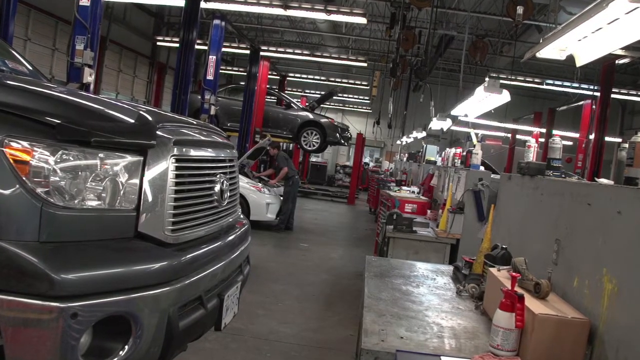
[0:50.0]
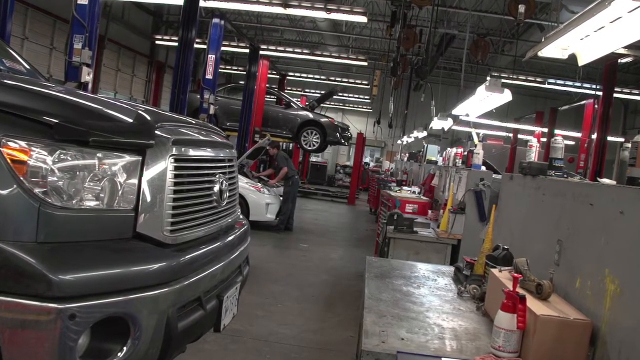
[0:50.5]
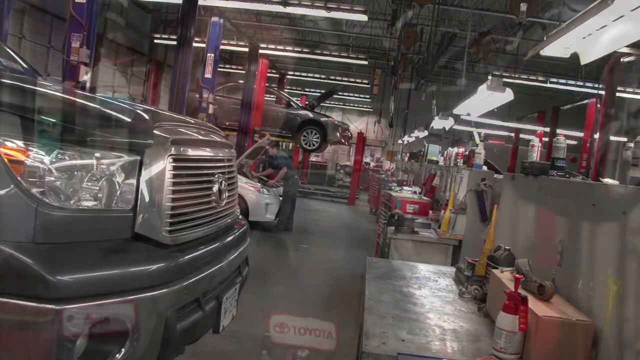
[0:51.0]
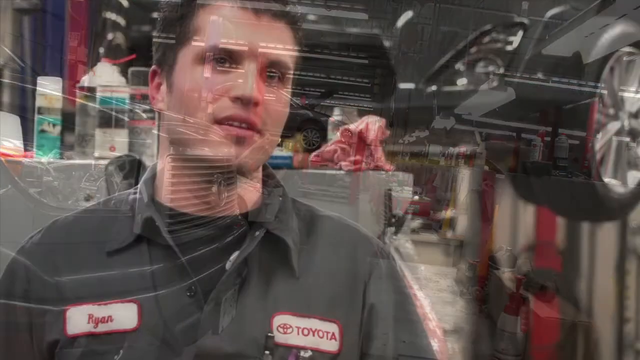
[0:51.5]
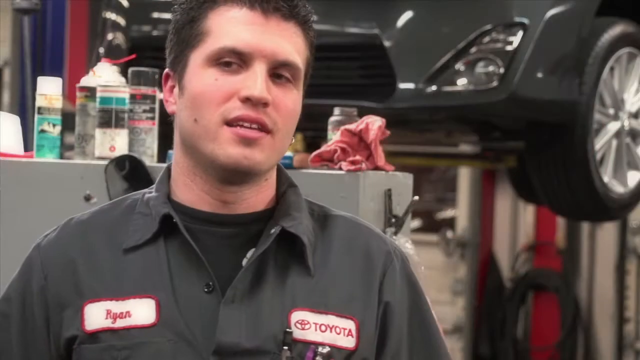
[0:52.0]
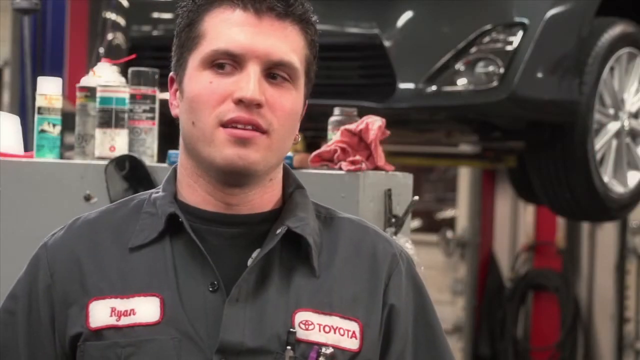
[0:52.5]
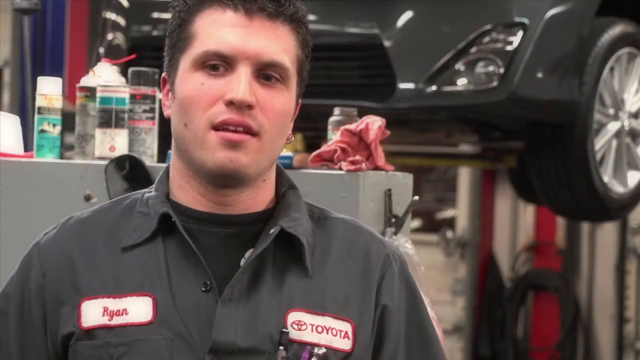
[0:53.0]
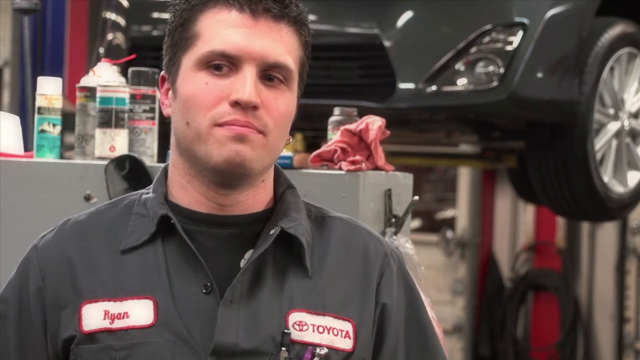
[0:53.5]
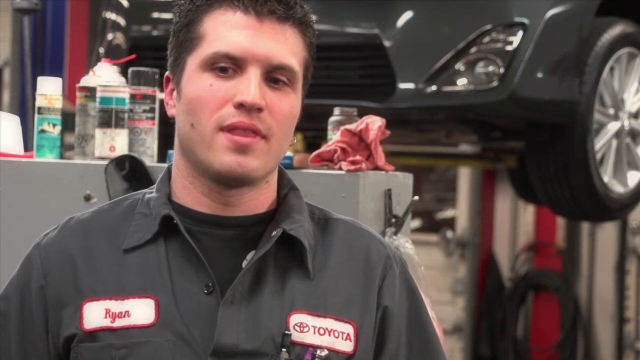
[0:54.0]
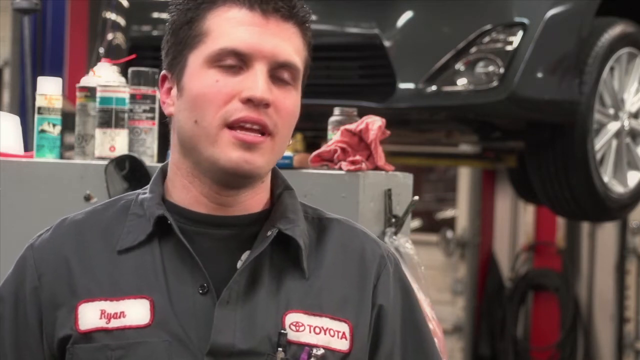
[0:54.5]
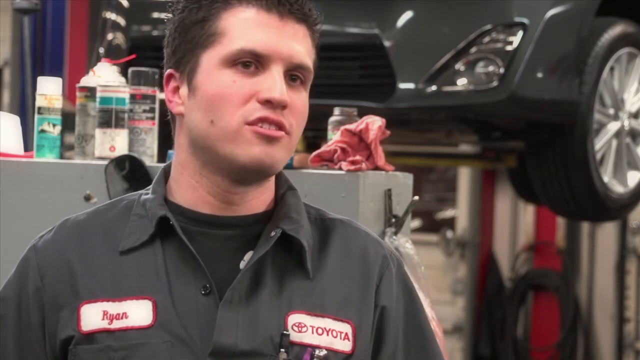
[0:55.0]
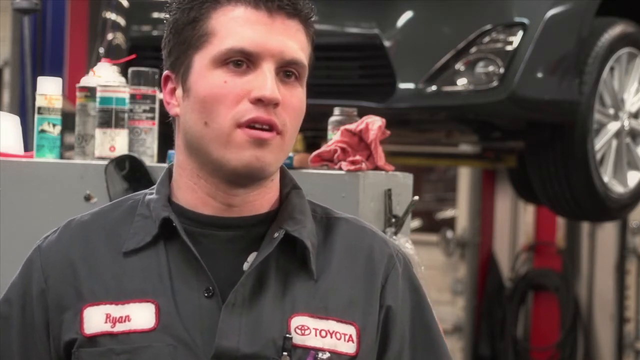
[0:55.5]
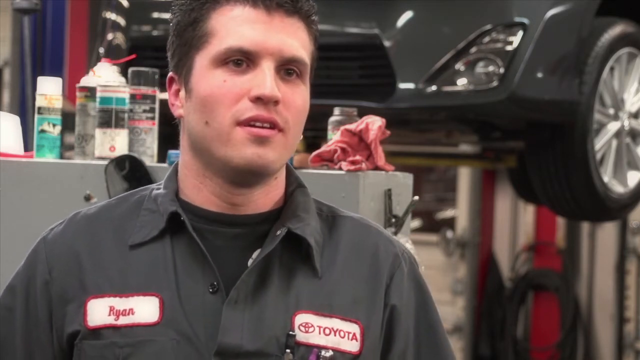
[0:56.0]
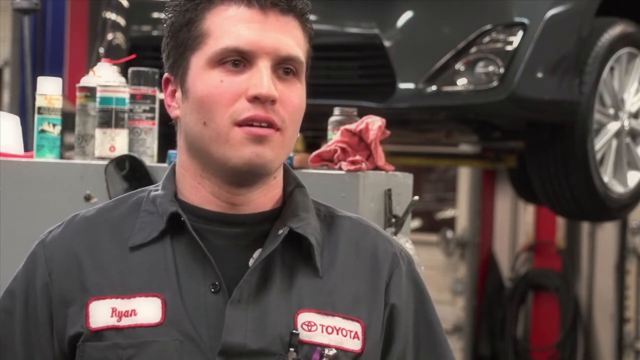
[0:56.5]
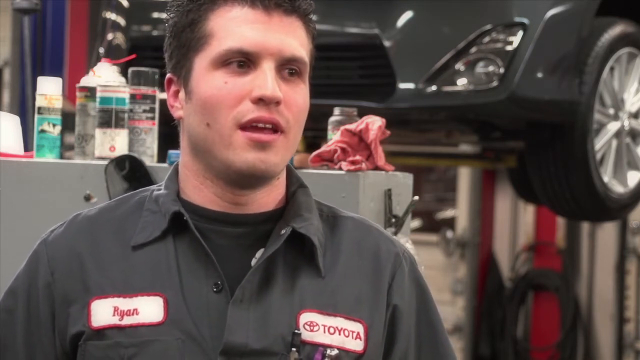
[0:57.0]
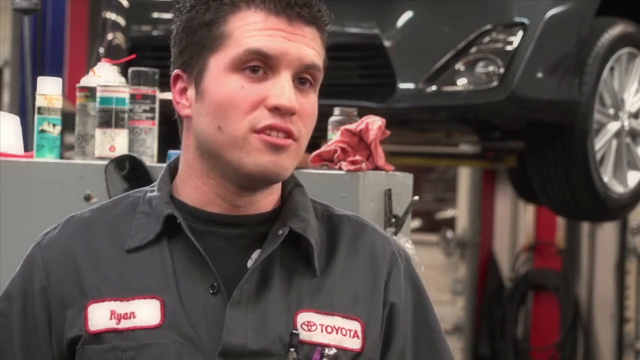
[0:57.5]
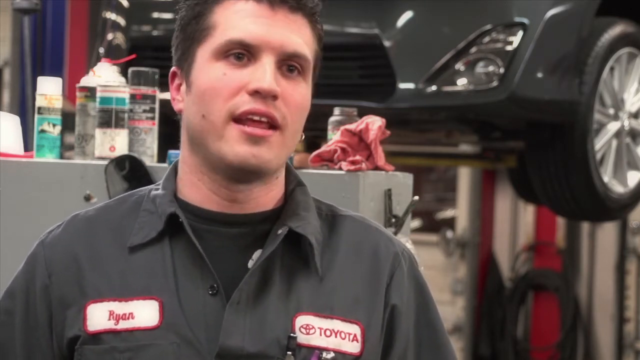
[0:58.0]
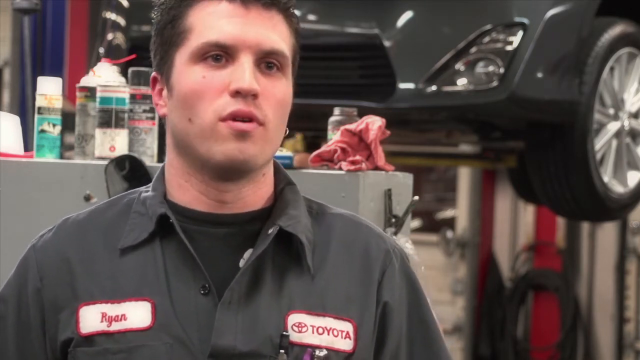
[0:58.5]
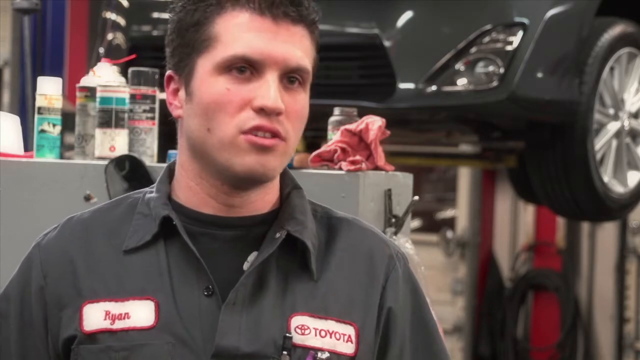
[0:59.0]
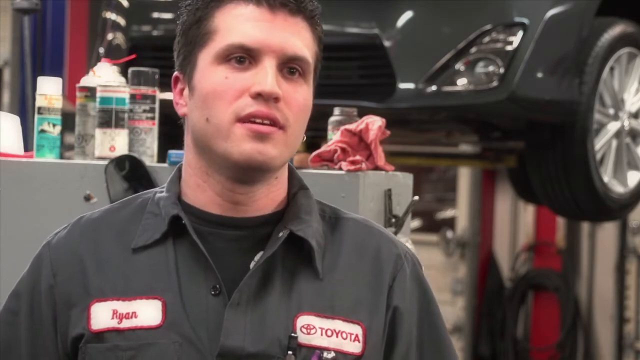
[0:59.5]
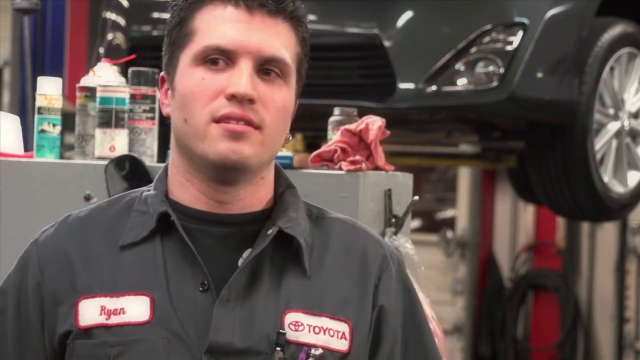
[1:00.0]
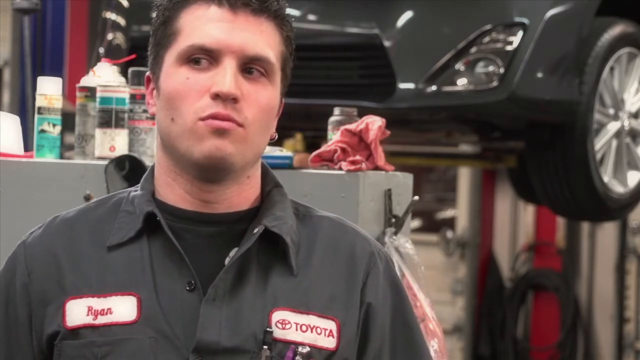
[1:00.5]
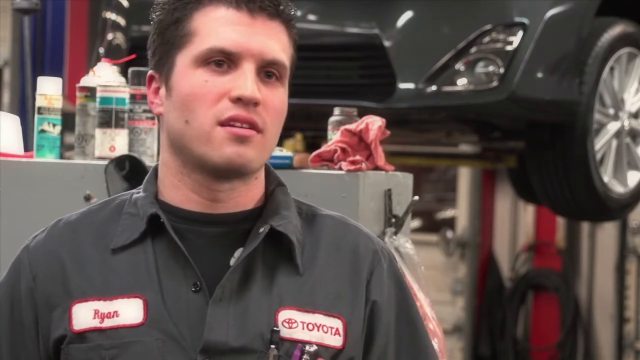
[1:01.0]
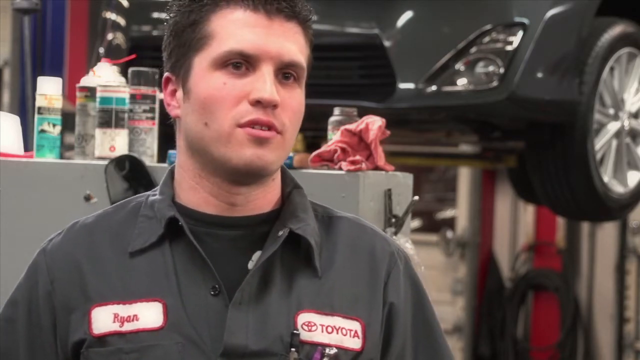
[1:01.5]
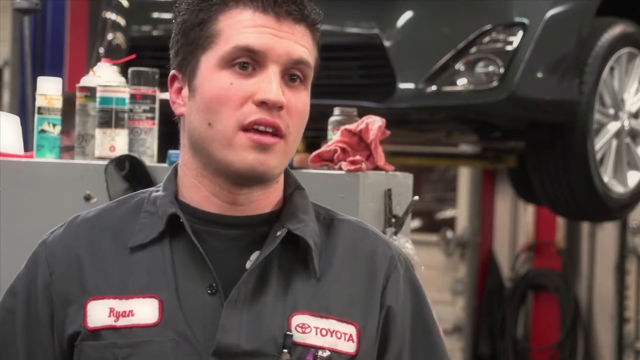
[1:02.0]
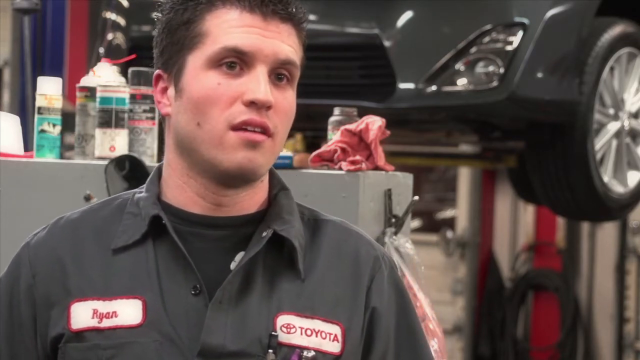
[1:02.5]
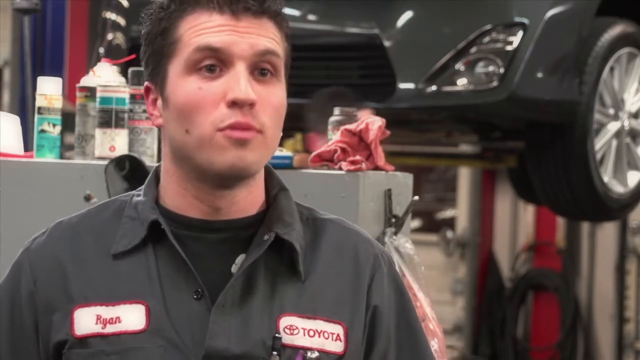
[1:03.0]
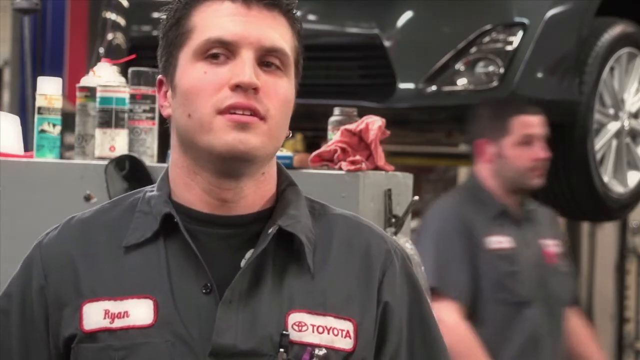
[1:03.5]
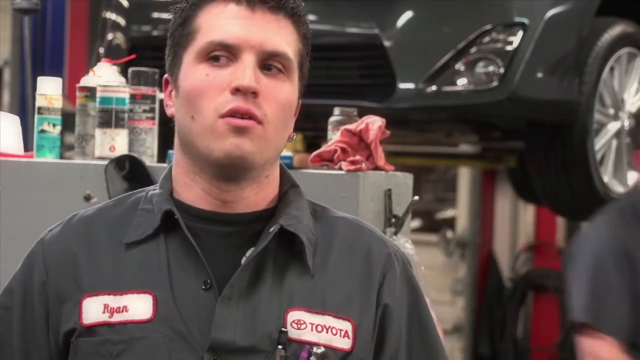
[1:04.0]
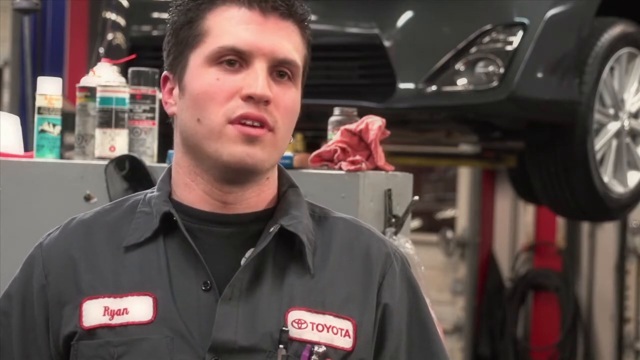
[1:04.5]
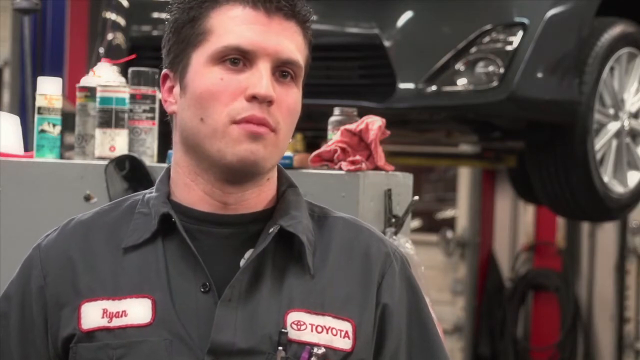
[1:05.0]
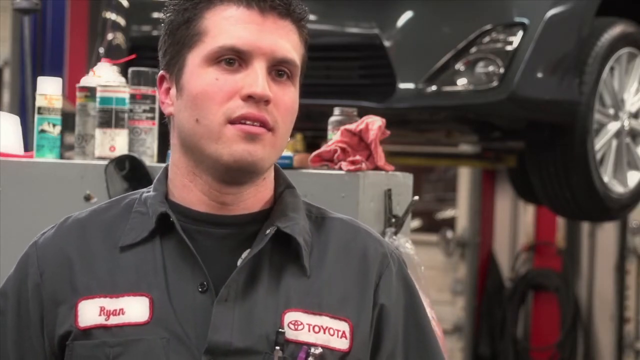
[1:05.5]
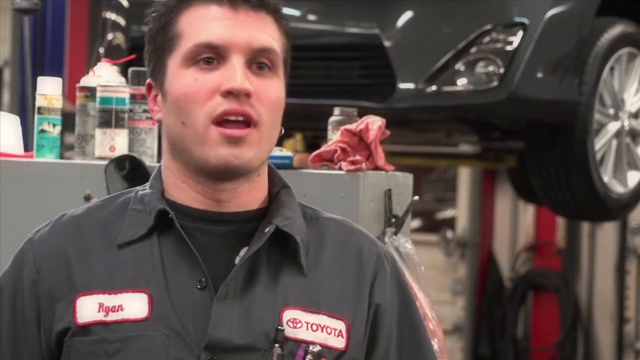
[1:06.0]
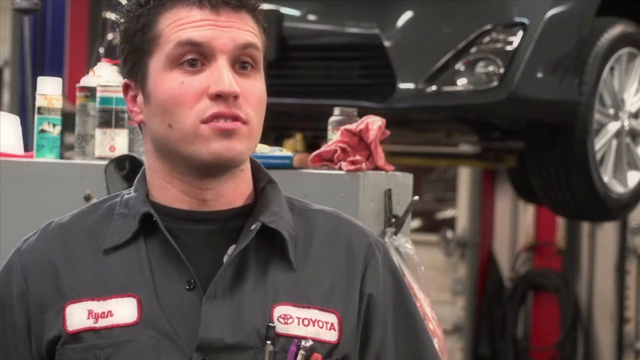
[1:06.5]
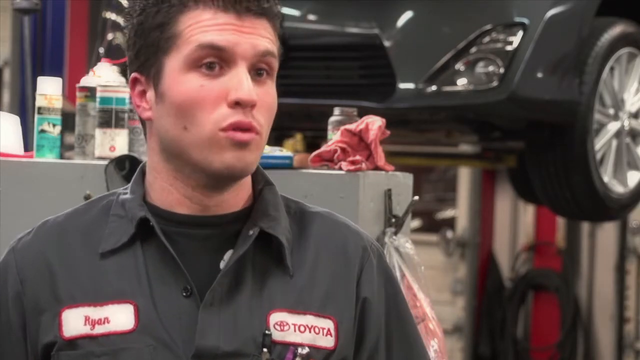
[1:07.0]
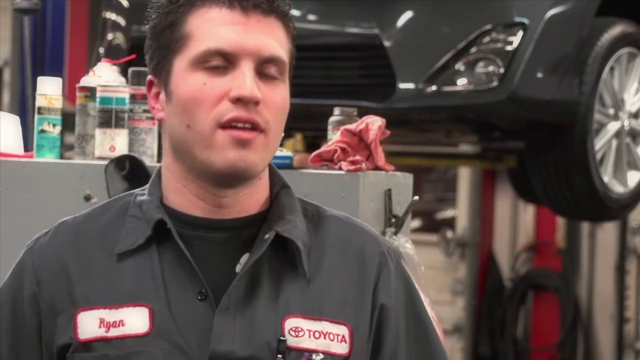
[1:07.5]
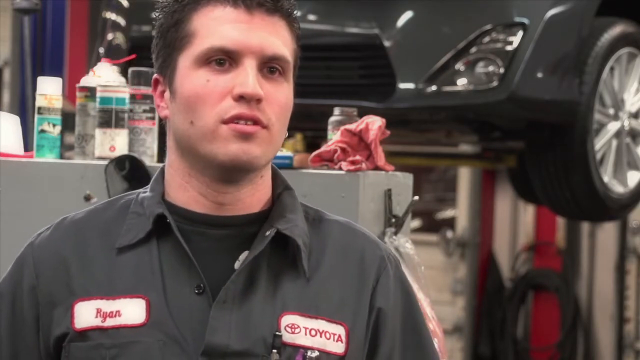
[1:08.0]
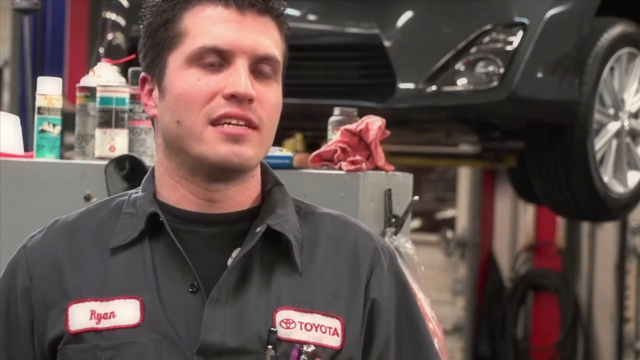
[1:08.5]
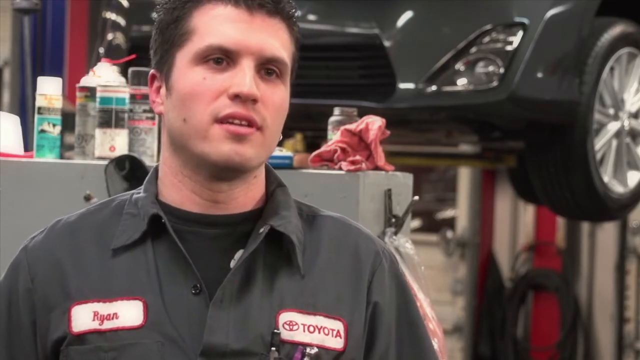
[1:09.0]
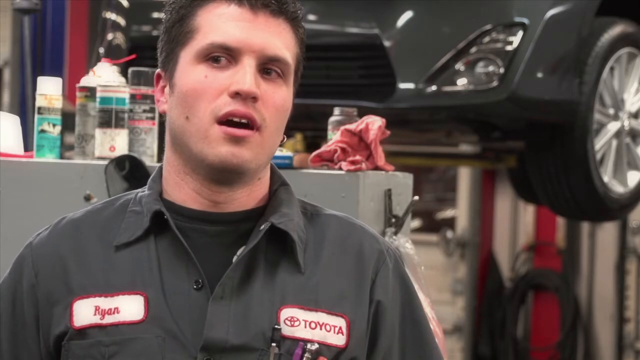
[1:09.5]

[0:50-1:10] A wide shot shows a large section of the car shop. All the way in the back, a dark gray vehicle with its hood open is elevated off the ground. Multiple red pillars run throughout the shop next to the lights, which shine from above and brighten the area below. To the left of the elevated gray car, a person who looks like one of the repairmen works on a smaller white car in front of him with its hood open. To the left of them is a large Toyota truck. The video then cuts to Ryan, standing in the same position and talking to the camera as he is interviewed. Behind him is a large object holding spray bottles on top of it, and behind that a black car is elevated off the ground.